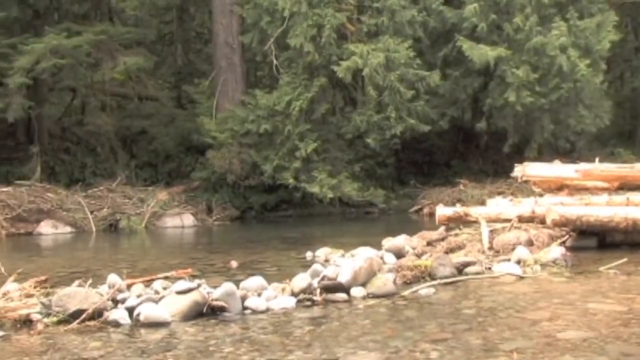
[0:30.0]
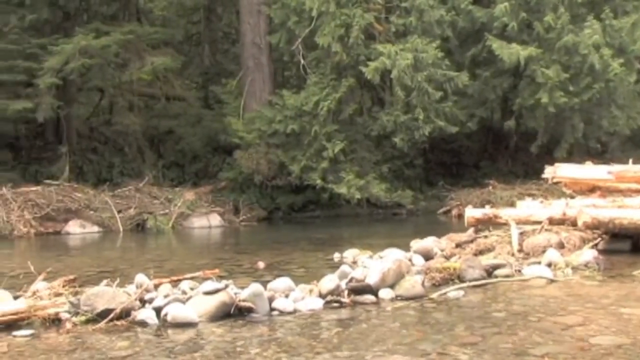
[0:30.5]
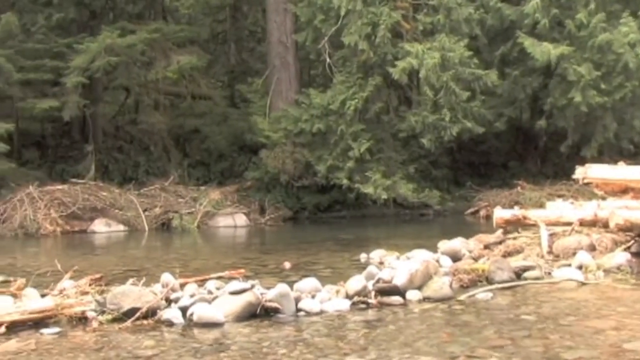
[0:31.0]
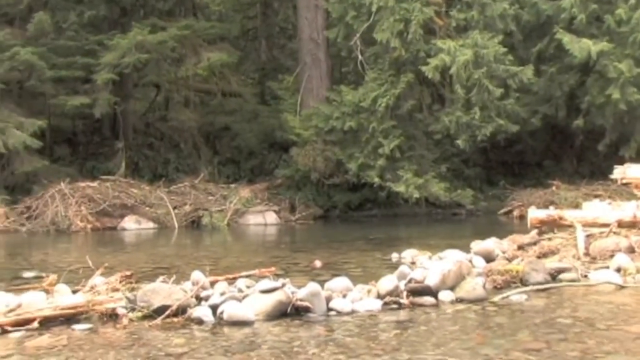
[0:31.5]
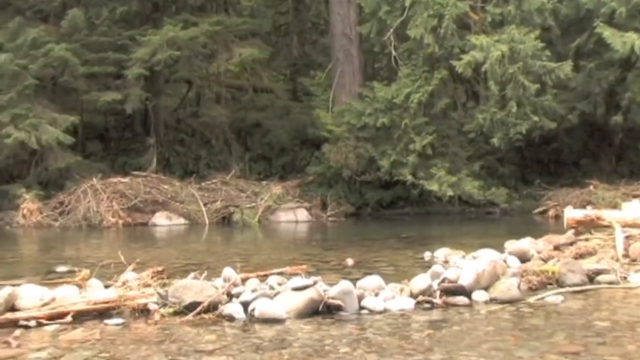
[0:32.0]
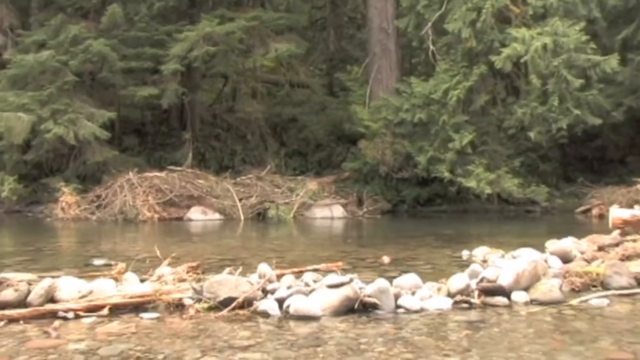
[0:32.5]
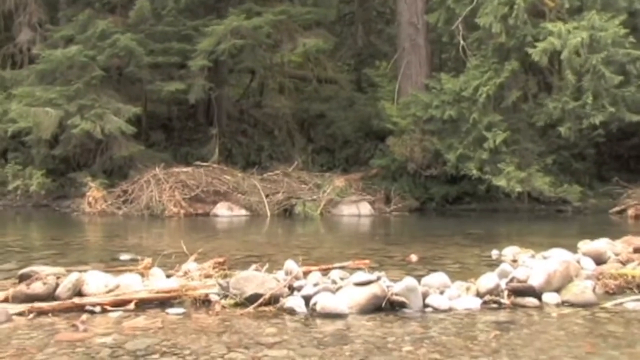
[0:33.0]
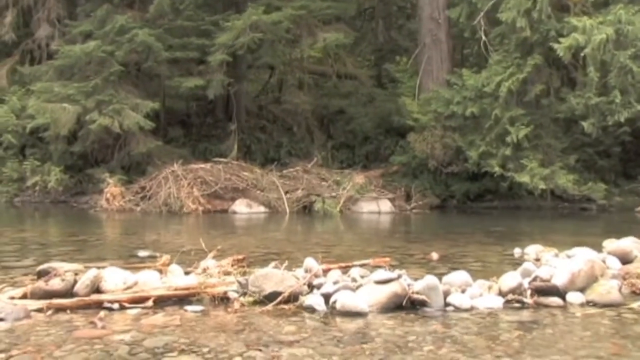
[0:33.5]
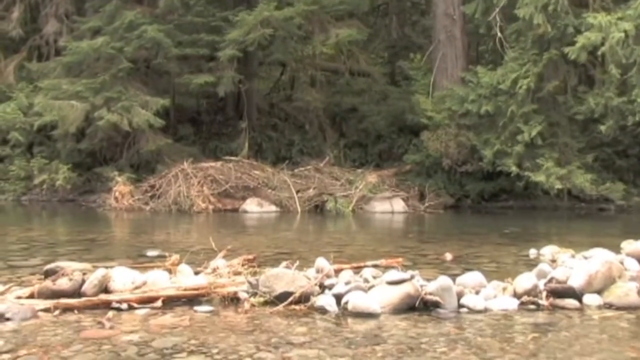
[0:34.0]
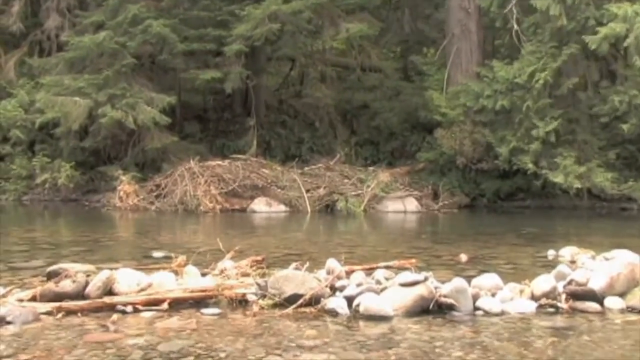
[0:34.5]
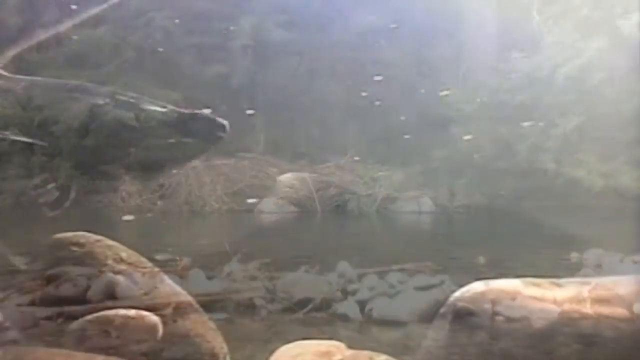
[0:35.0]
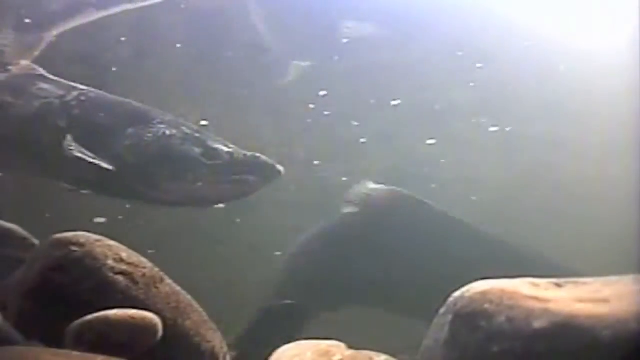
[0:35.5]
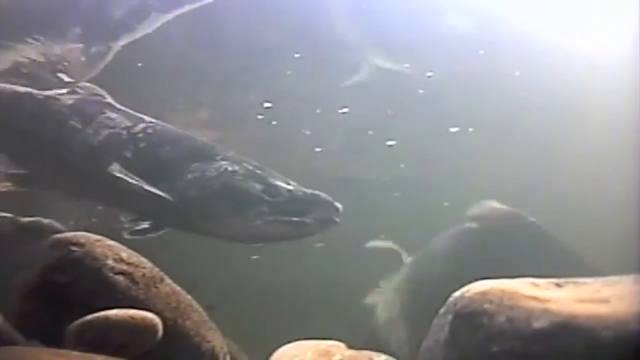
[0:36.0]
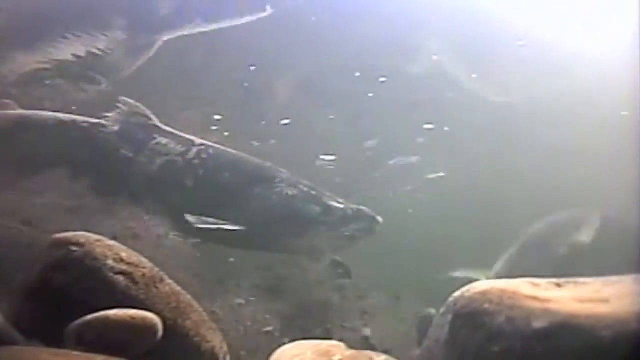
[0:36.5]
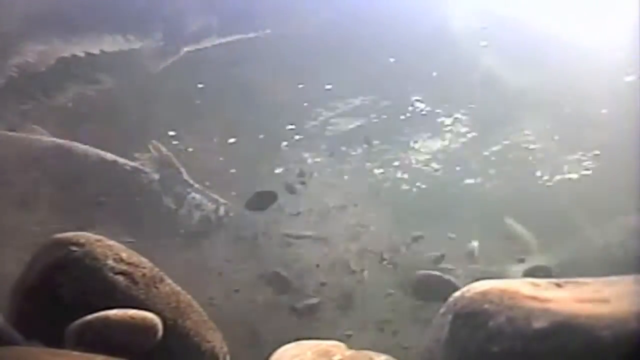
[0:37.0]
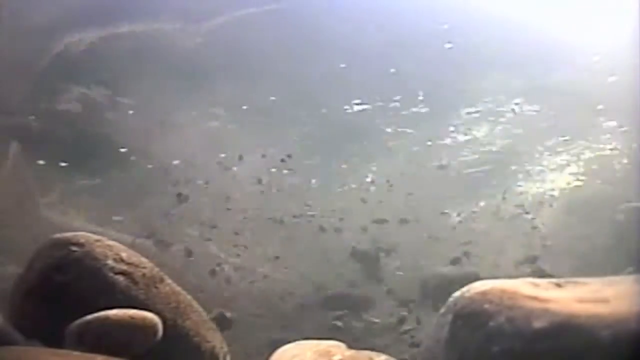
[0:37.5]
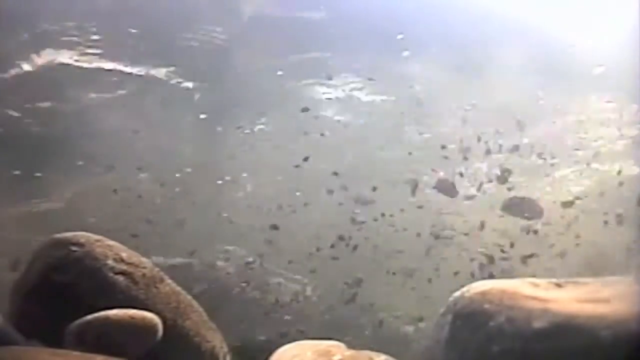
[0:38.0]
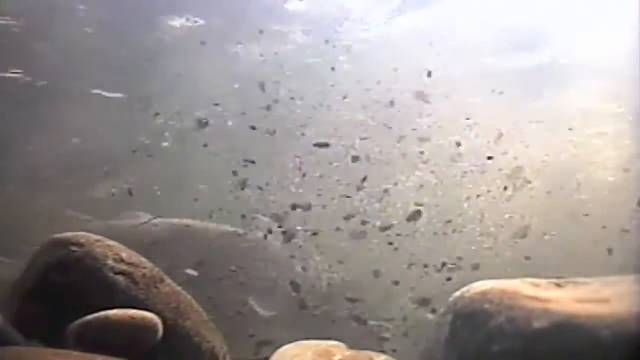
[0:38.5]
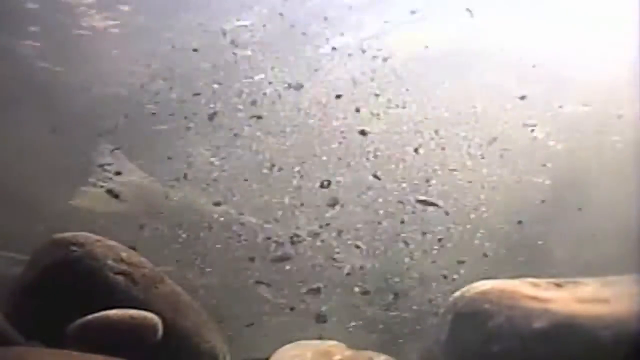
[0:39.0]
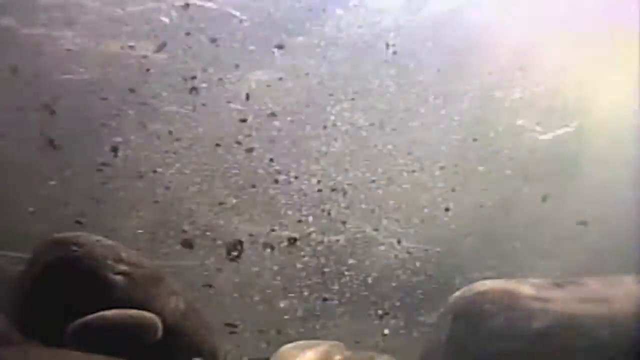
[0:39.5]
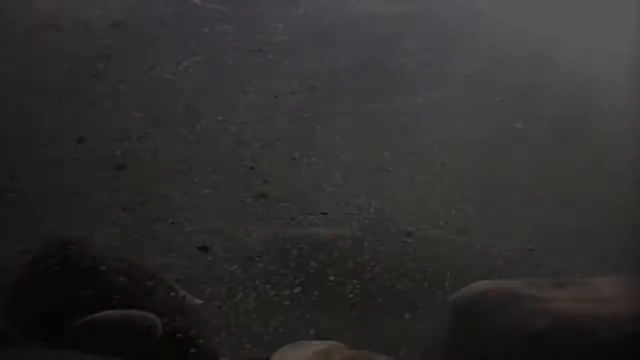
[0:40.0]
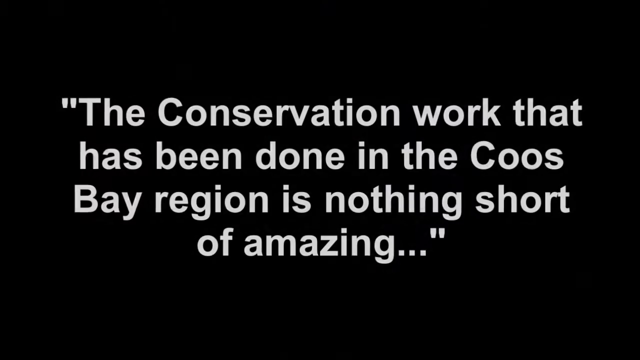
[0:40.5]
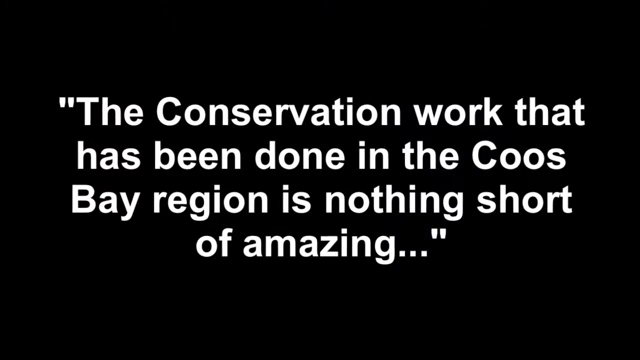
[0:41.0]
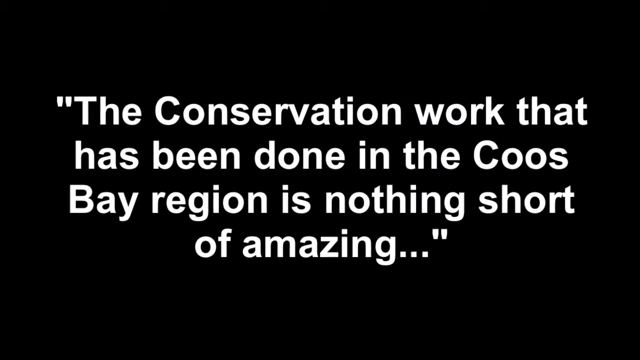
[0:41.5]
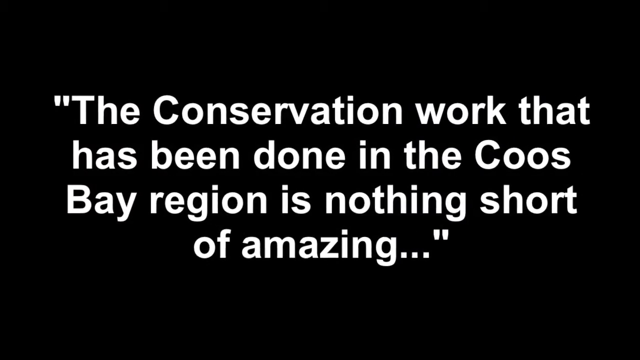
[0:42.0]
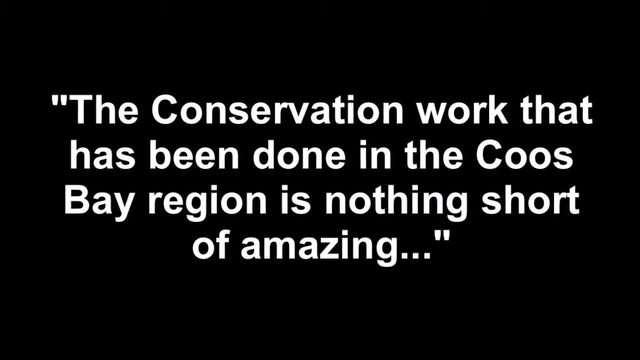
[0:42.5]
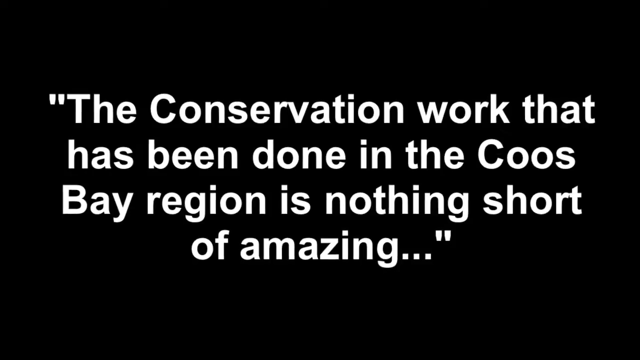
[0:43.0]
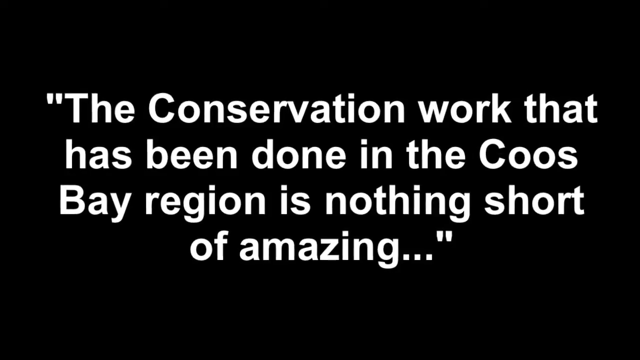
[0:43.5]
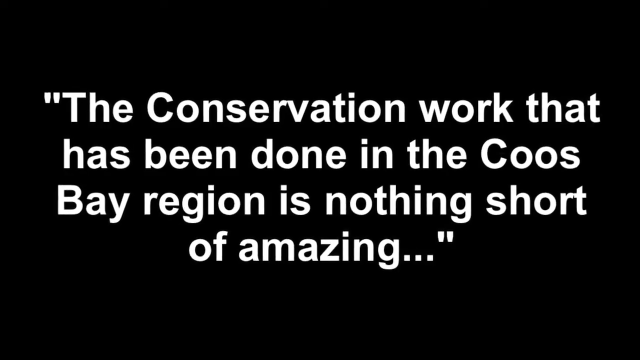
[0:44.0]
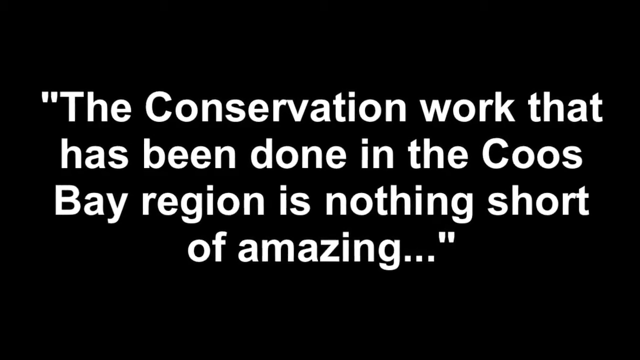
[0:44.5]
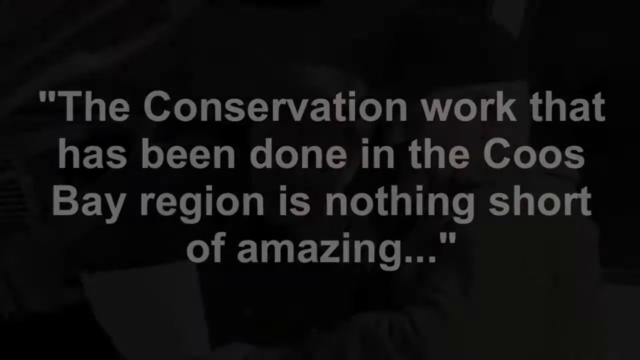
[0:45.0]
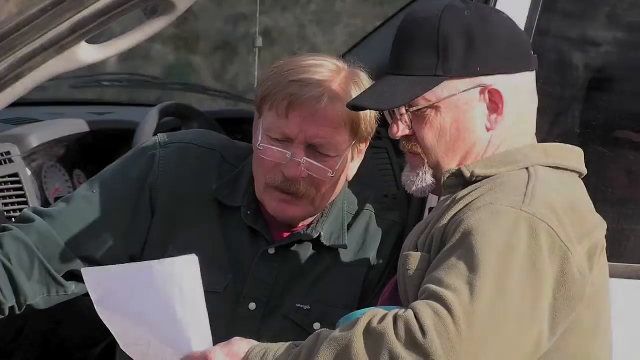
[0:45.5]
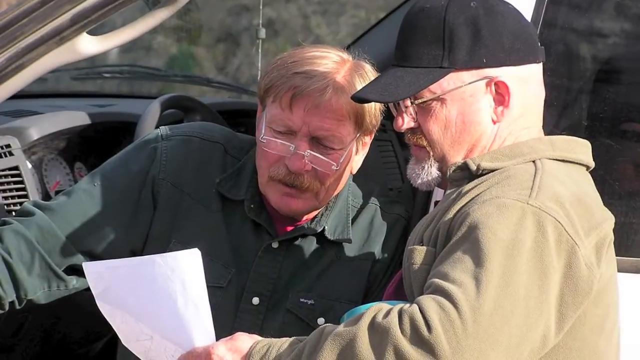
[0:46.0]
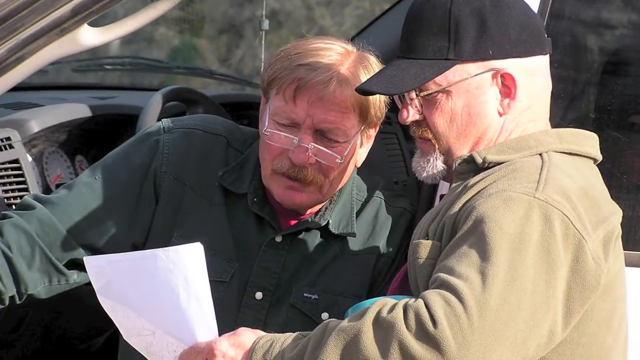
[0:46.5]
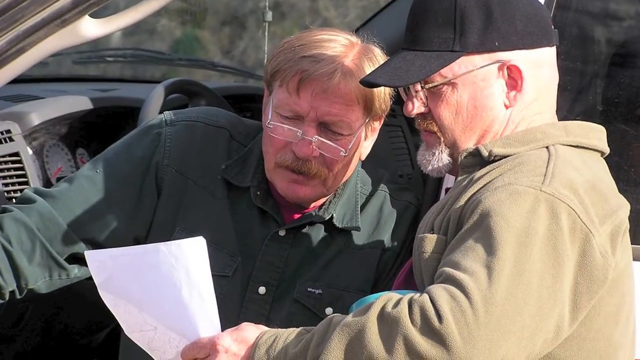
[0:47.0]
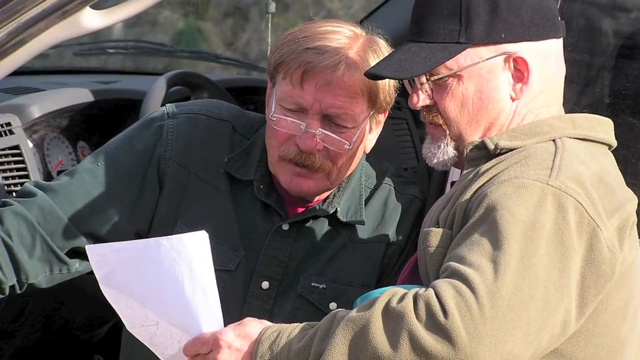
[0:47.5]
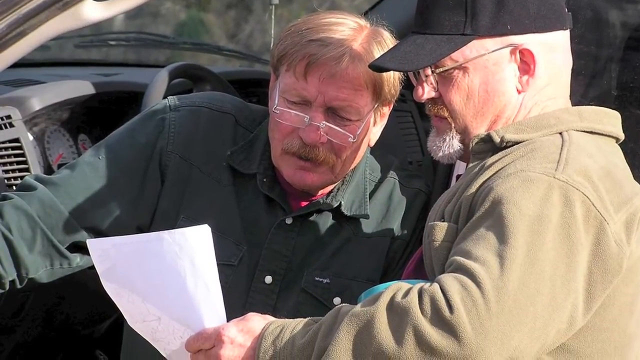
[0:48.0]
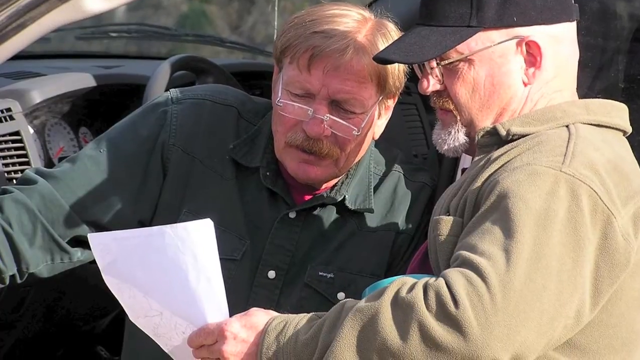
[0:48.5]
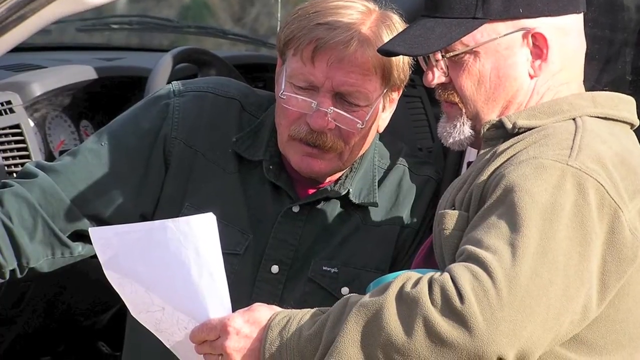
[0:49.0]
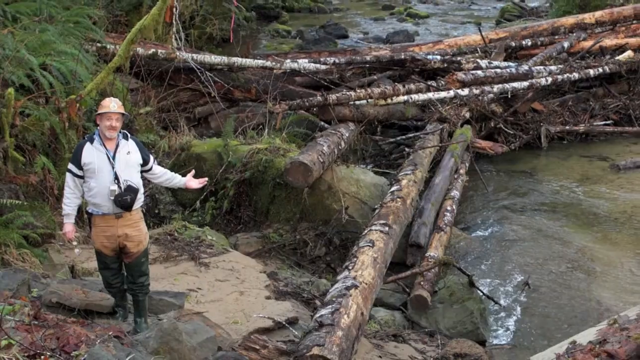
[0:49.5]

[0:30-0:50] A creek-like area is shown, and the camera pans to the left of the creek. Some rocks are visible outside the water and some underneath it. The water is a murky brown and green color. A stack of tree limbs, stacked on top of each other, is in the center of the shot, with a bunch of trees and shrubbery behind it. The video cuts to an underwater shot of smooth, sphere-like rocks and long, dark-colored fish swimming. One fish swims in the bottom right-hand corner, and as it does, a bunch of rocks, debris and dirt rise up in the water. Next, a black background shows white text that reads "the conservation work that has been done in the Coos Bay region is nothing short of amazing..." A still photo follows of two older-looking white men, both wearing glasses and both looking at a white piece of paper. One wears a black hat and a green type of jacket; he is bald but has a very short, trimmed gray chin hair. The other, to his left, wears a green button-up shirt and has blonde hair and a blonde mustache; his eyes look furrowed as he looks at the paper. Then comes another shot of a man posed by a bunch of logs.